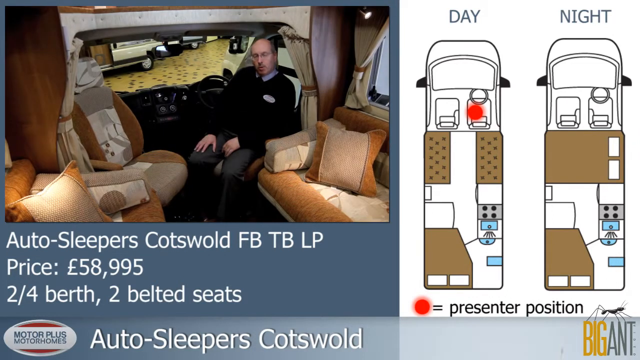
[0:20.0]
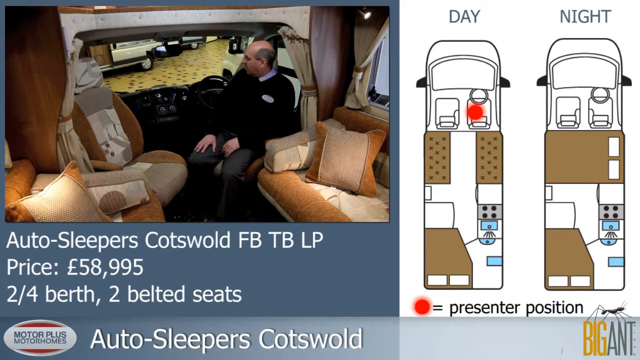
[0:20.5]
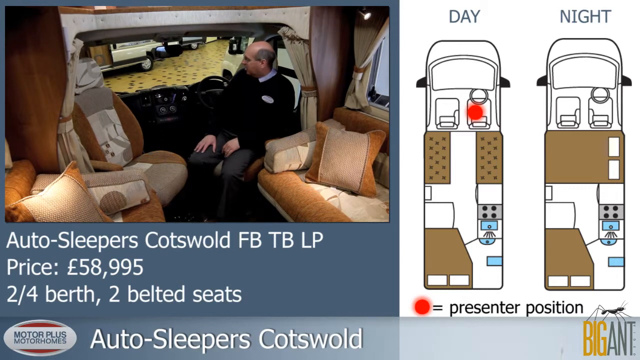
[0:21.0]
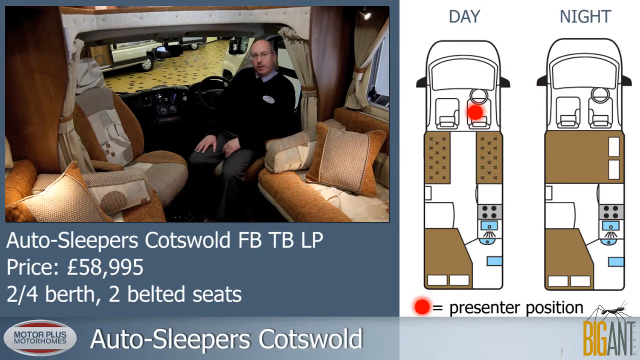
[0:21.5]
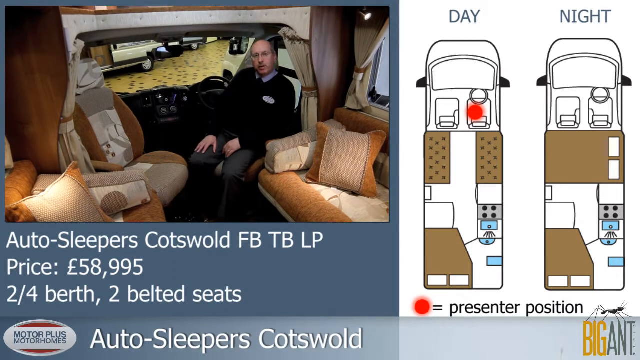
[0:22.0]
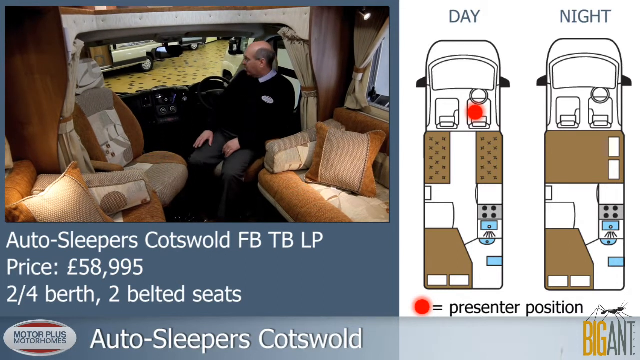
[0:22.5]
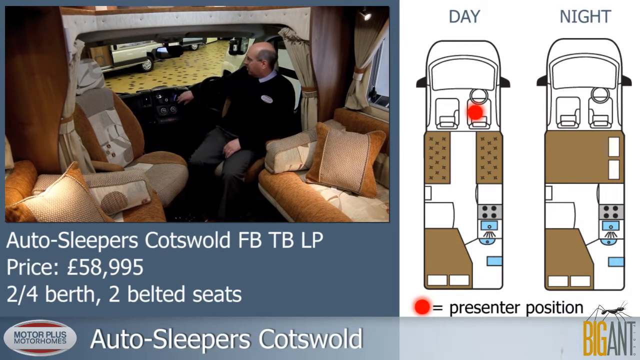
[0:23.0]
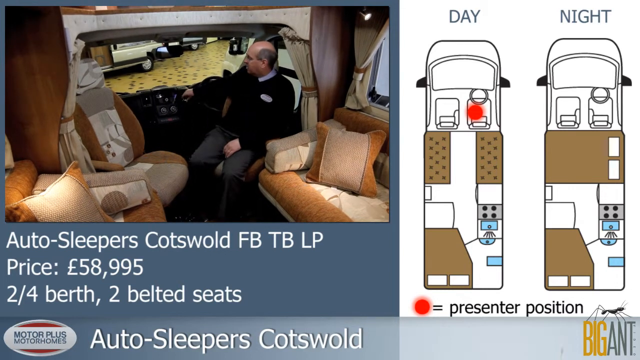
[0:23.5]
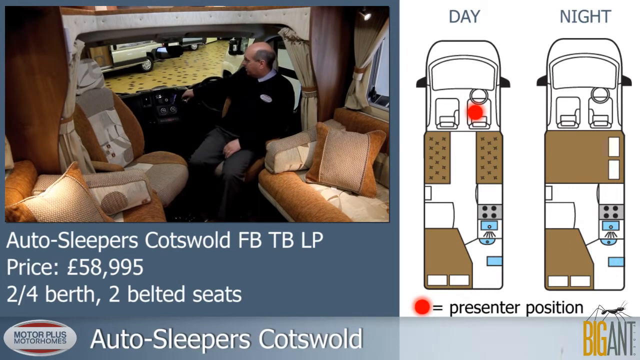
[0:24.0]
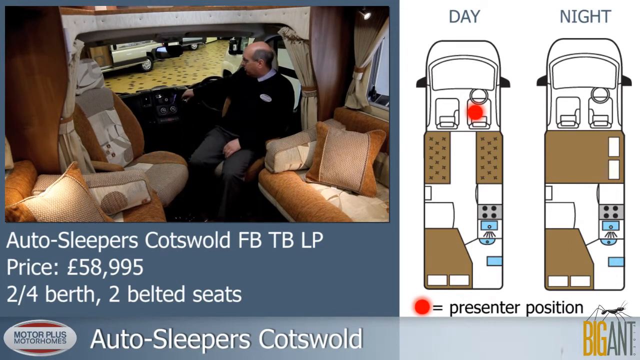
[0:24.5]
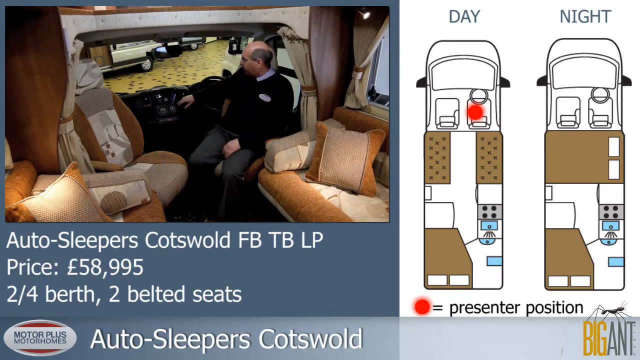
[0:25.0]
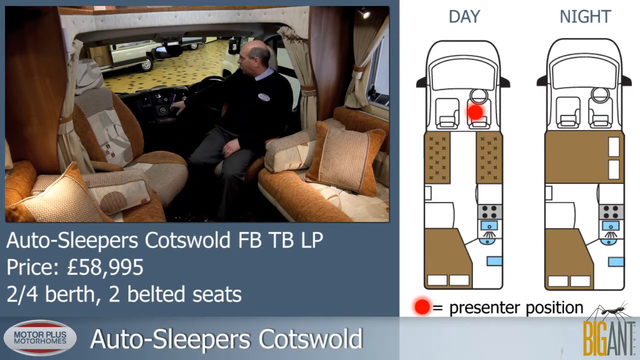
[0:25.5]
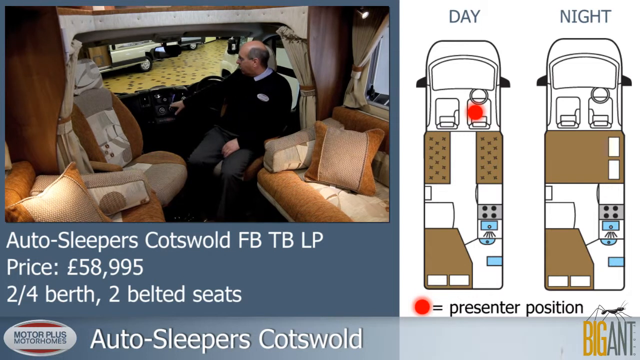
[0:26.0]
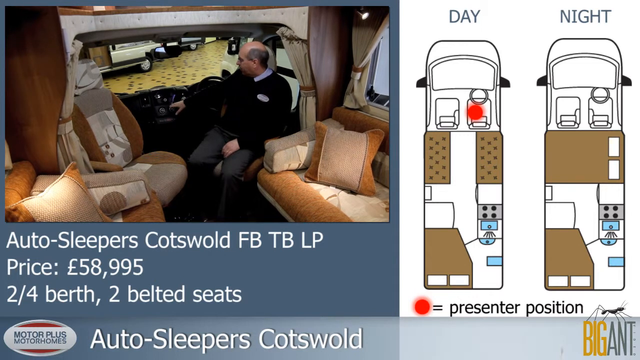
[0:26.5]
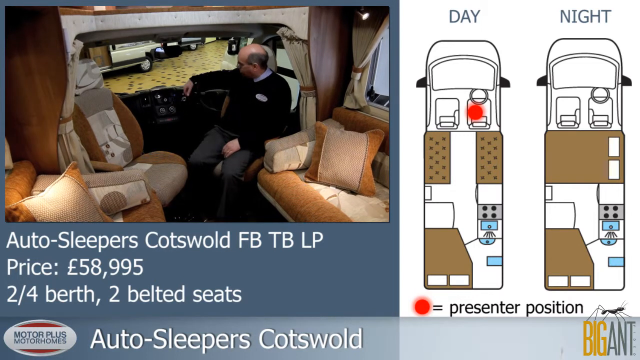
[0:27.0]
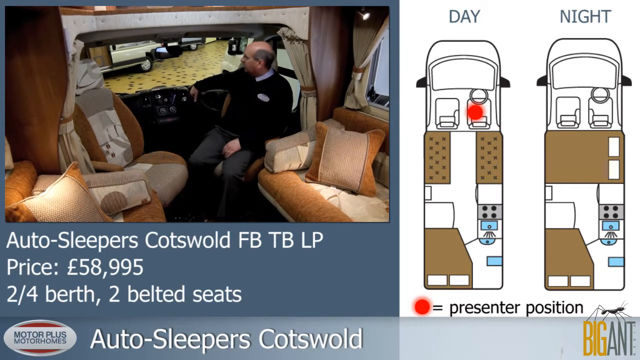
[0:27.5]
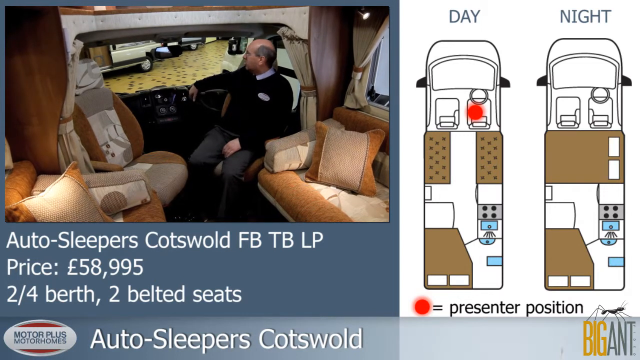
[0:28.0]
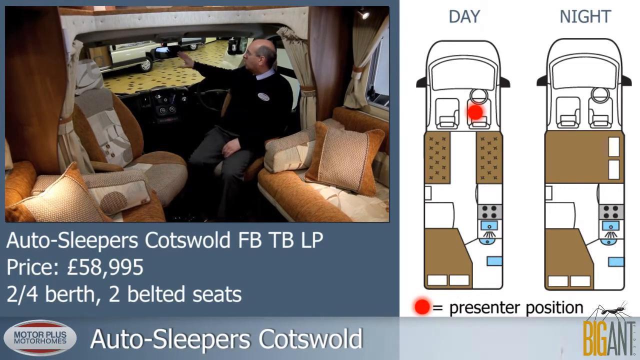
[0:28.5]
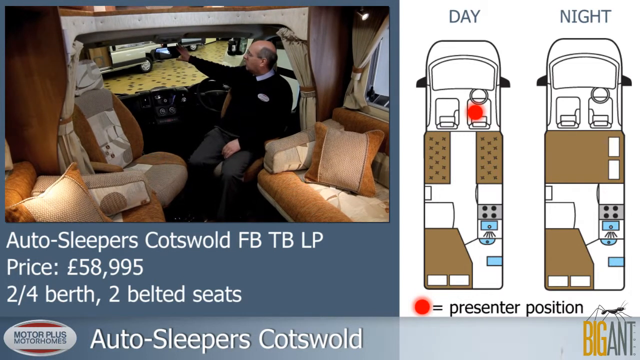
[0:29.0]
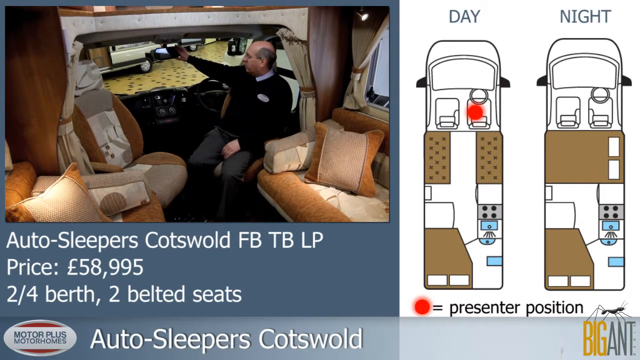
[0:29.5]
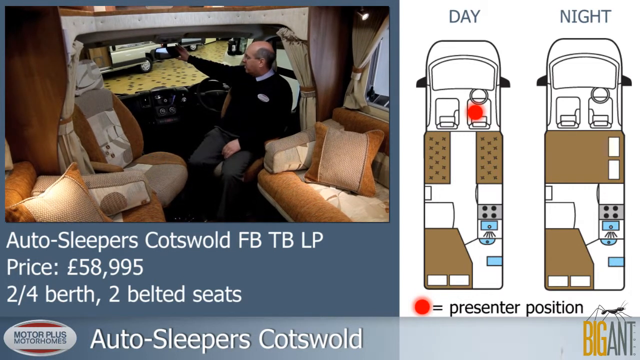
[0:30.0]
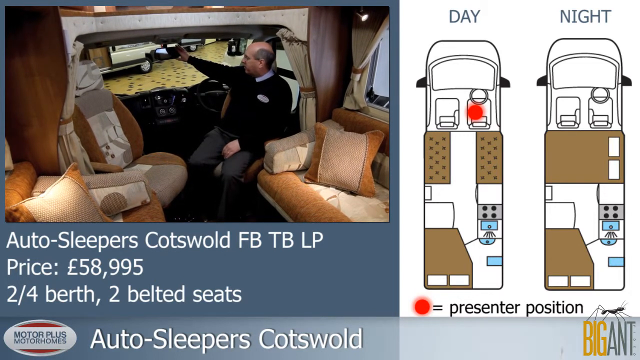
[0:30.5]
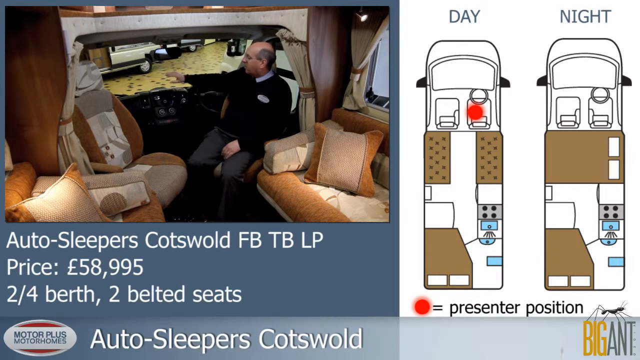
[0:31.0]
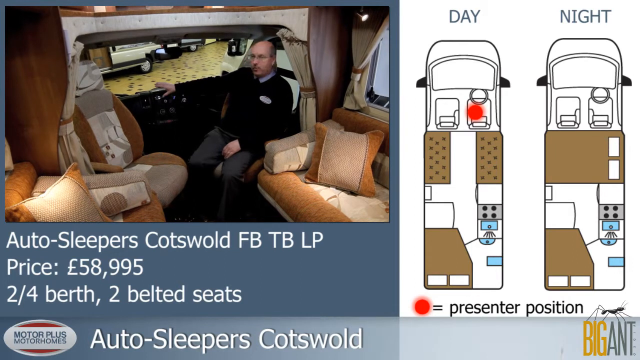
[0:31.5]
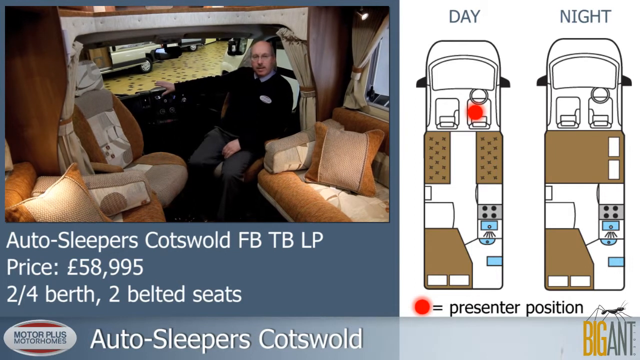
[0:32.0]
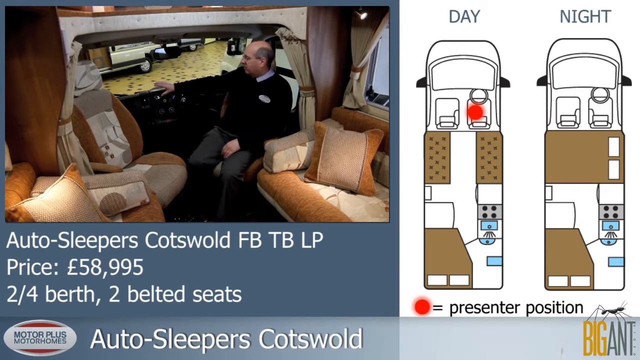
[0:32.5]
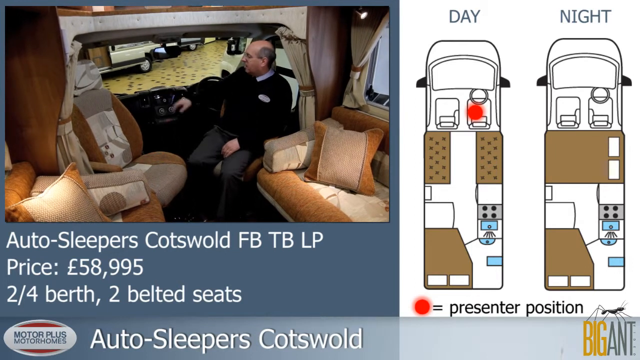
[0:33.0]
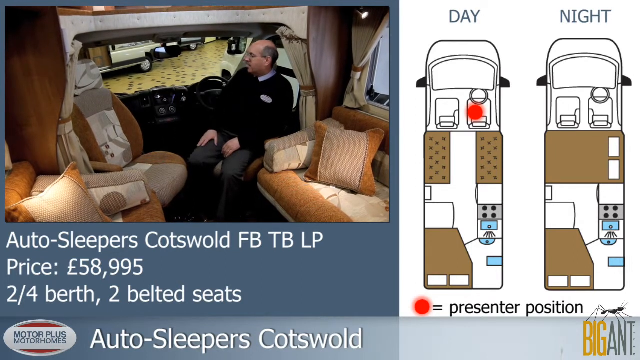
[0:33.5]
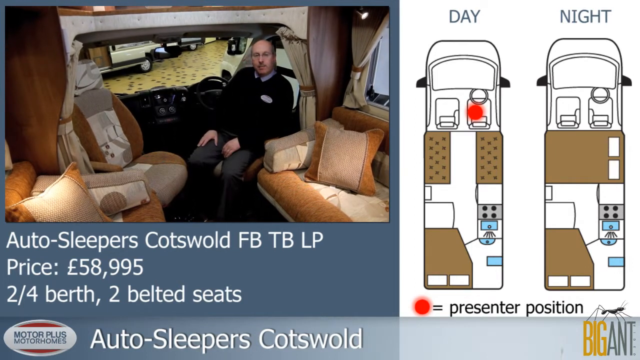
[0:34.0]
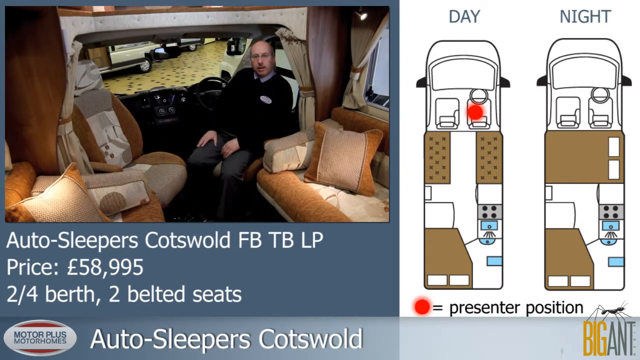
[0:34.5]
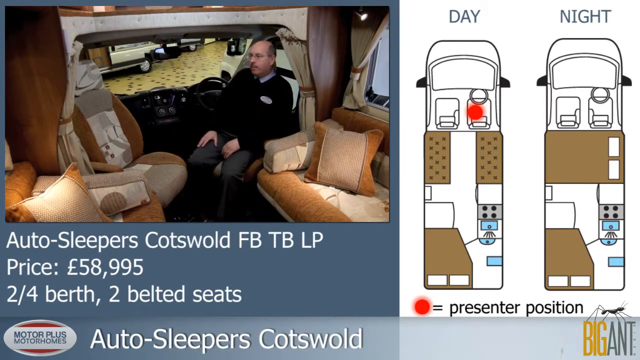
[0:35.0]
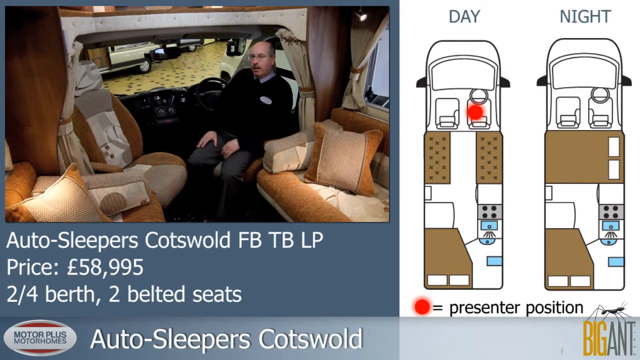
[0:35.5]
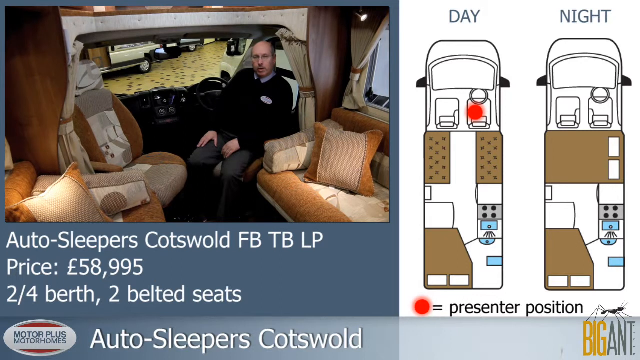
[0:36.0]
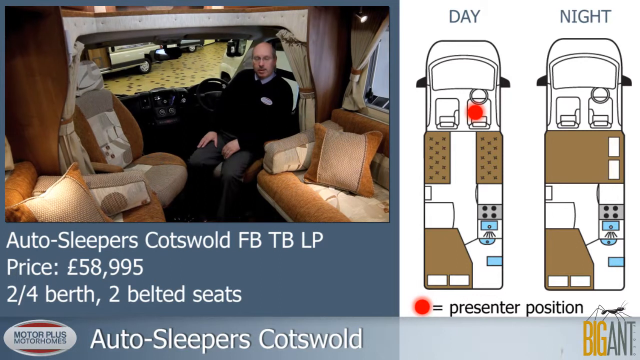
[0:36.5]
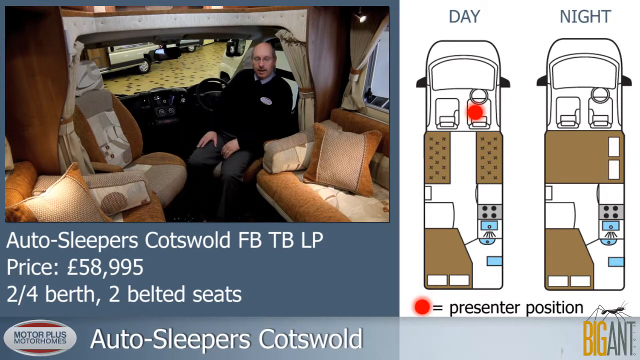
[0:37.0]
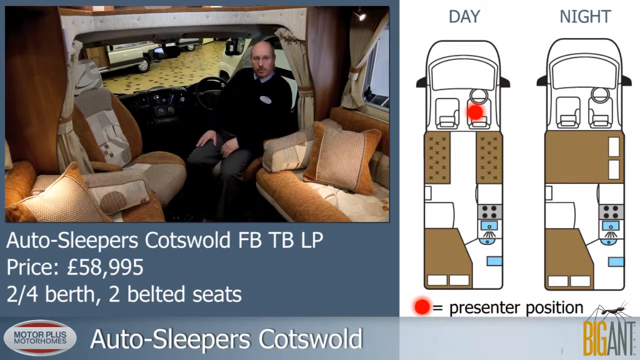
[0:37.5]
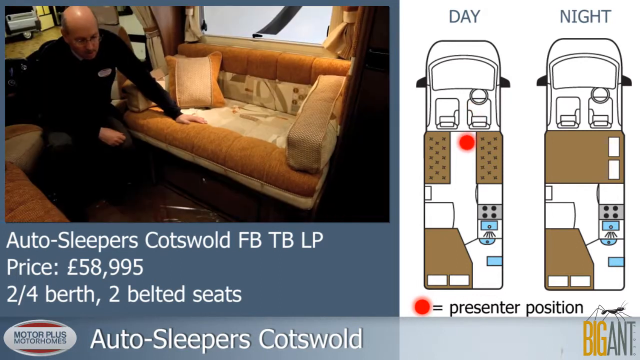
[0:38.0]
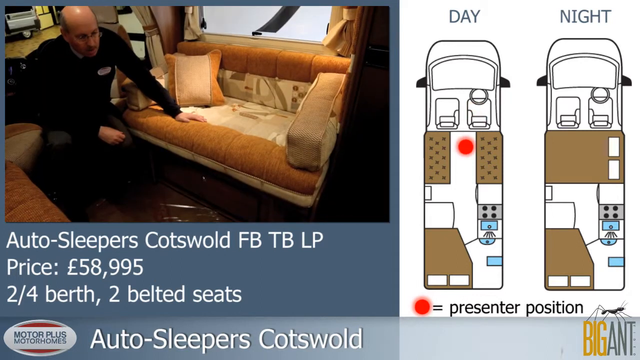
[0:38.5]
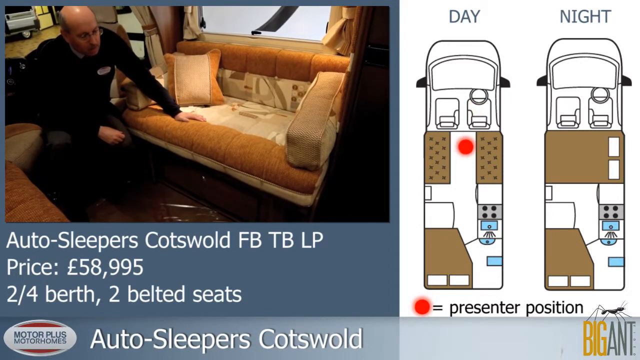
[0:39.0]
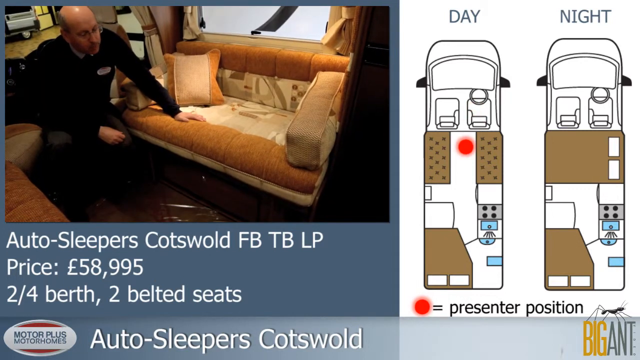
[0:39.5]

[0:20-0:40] The presenter shows the control panel at the front of the vehicle, the dashboard. The driver's position is on the right-hand side. He looks at the mirrors and points towards the passenger seat. All of the upholstery is a sort of brown colour with cream patterns, giving a somewhat retro look, and the interior has a sort of wood panelling with cream curtains. He then shows the sofa, presumably demonstrating how it can be turned into a bed. The salesman is a middle-aged man who is bald on top and wears glasses.